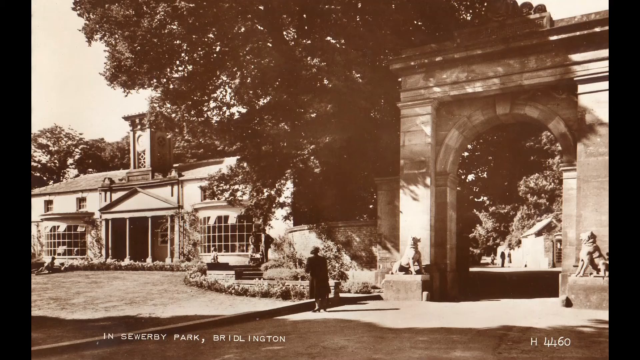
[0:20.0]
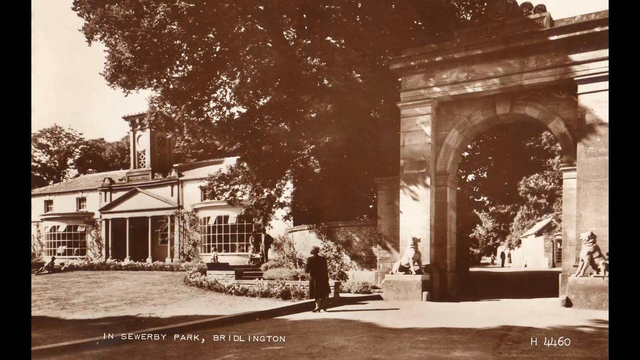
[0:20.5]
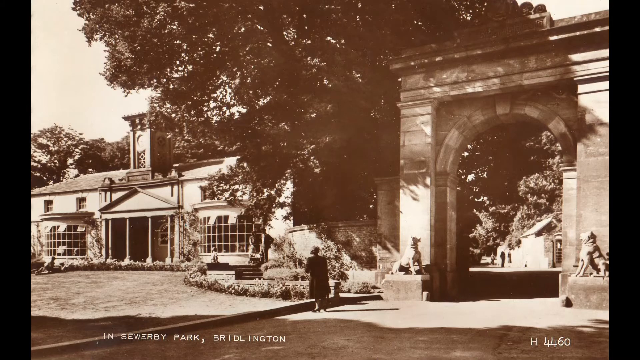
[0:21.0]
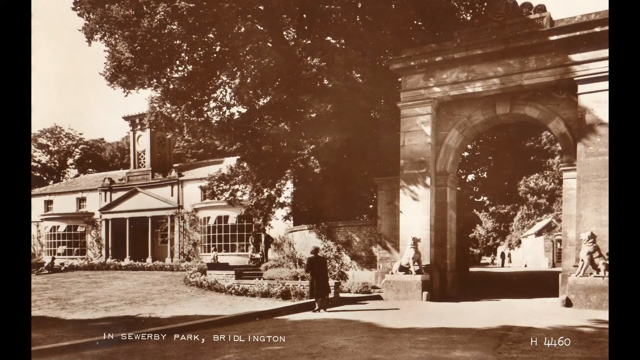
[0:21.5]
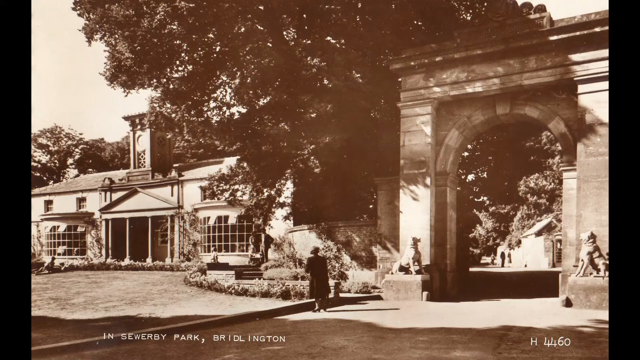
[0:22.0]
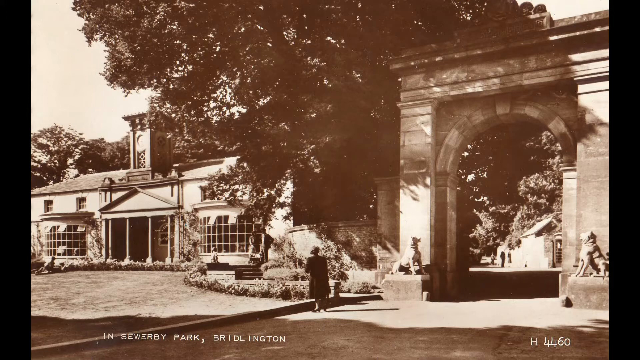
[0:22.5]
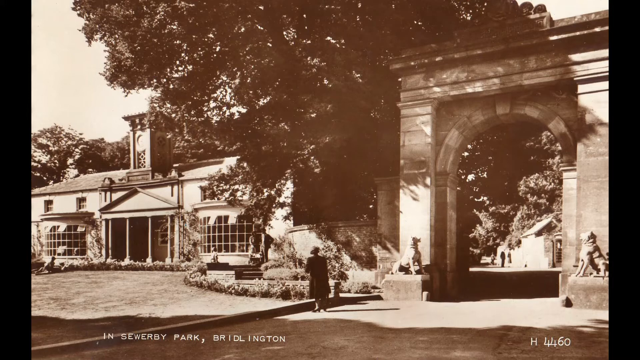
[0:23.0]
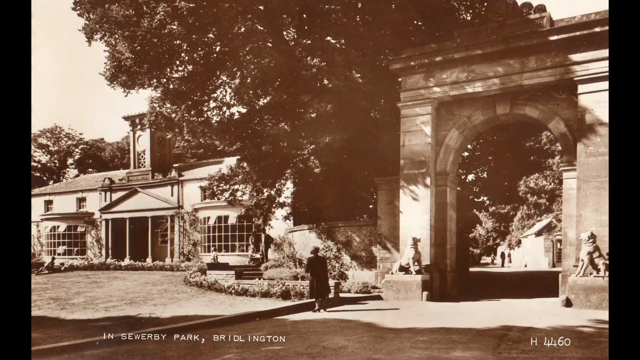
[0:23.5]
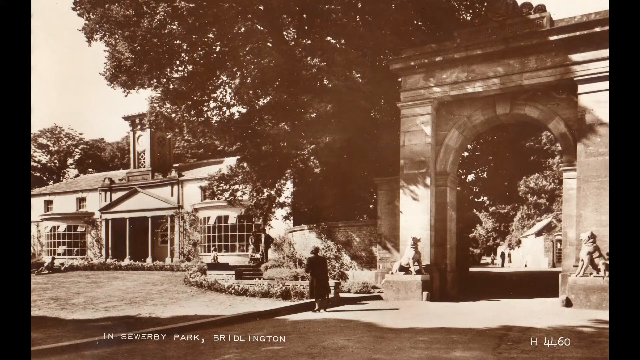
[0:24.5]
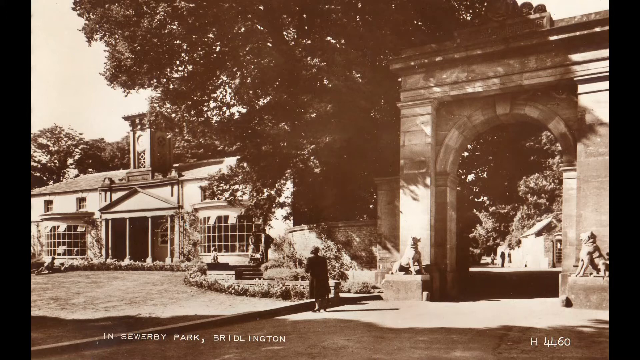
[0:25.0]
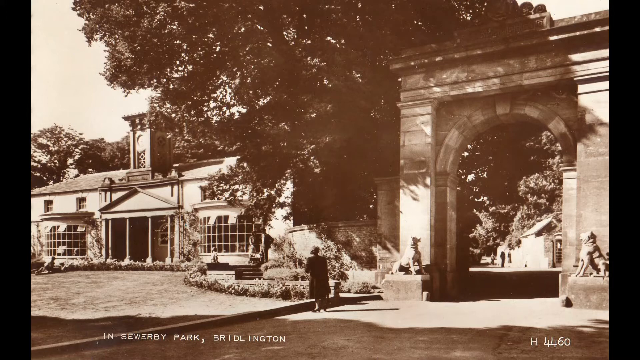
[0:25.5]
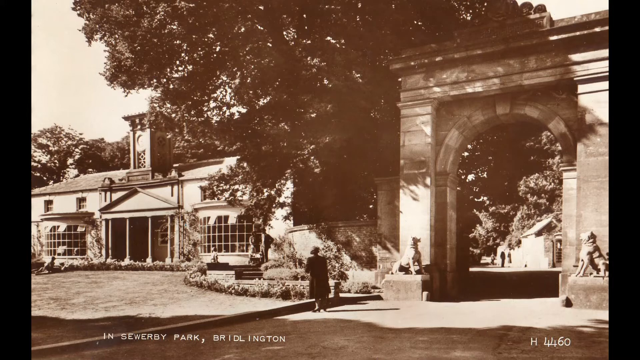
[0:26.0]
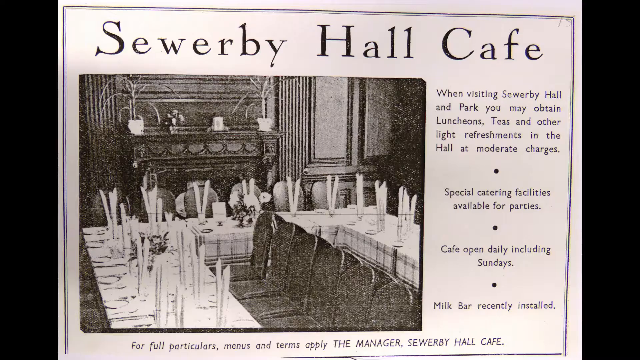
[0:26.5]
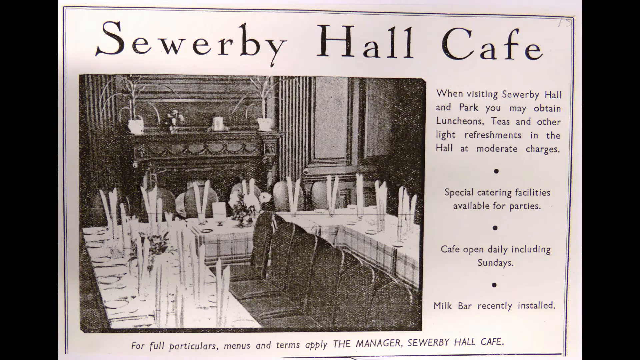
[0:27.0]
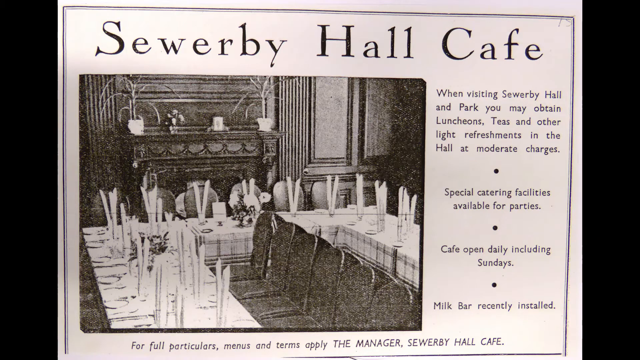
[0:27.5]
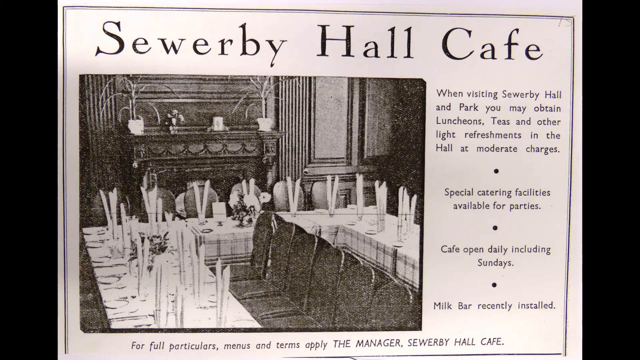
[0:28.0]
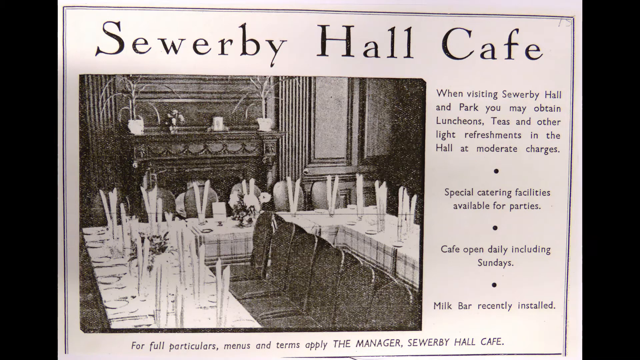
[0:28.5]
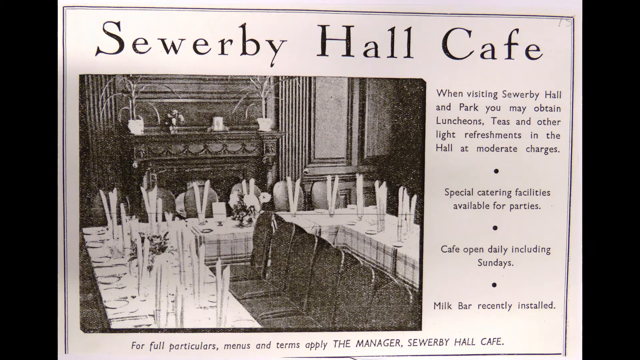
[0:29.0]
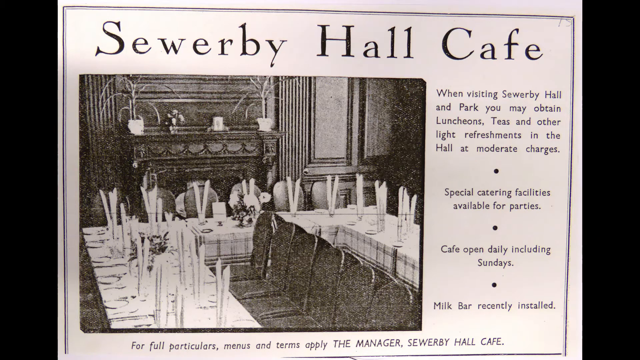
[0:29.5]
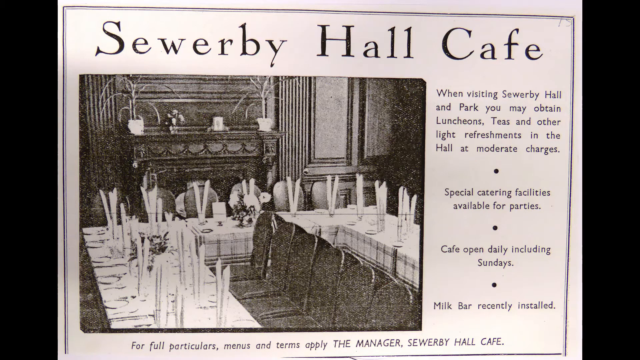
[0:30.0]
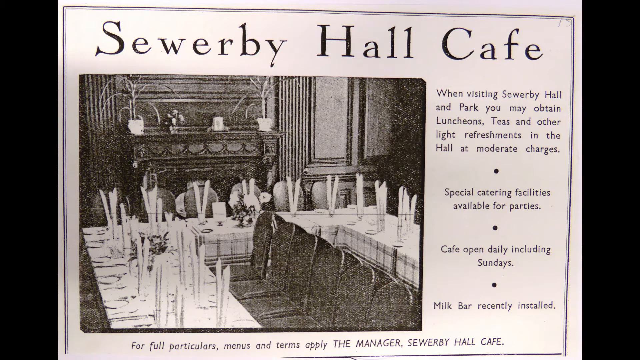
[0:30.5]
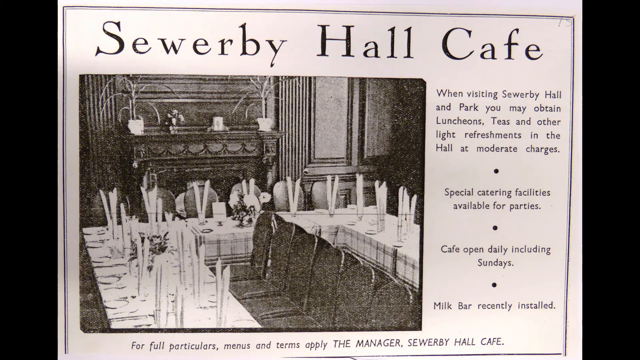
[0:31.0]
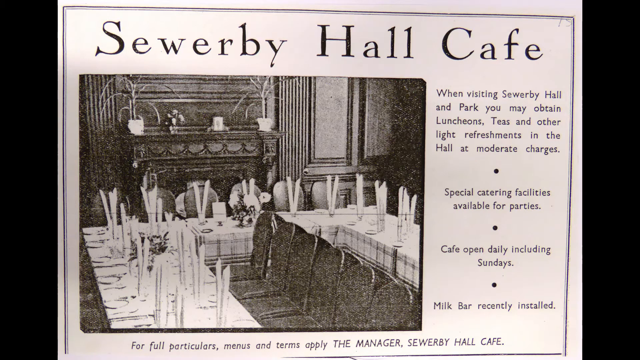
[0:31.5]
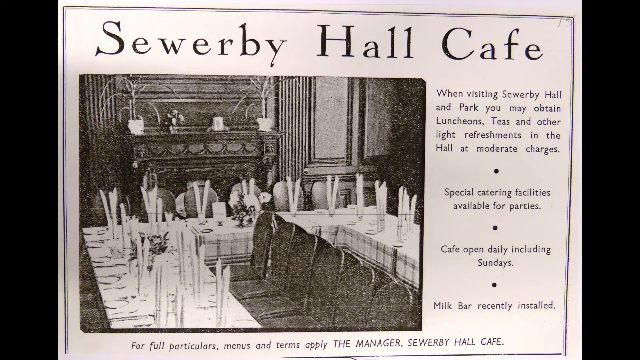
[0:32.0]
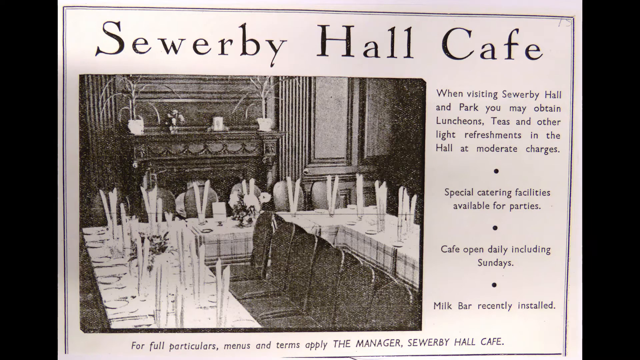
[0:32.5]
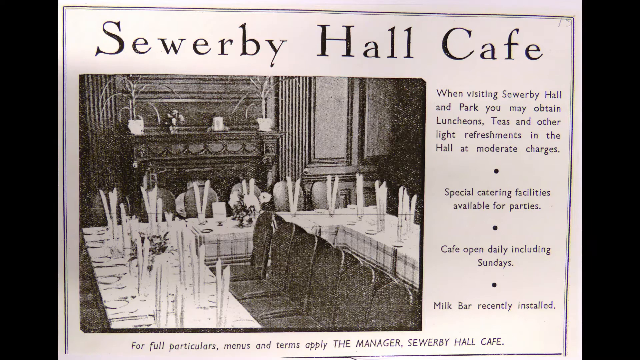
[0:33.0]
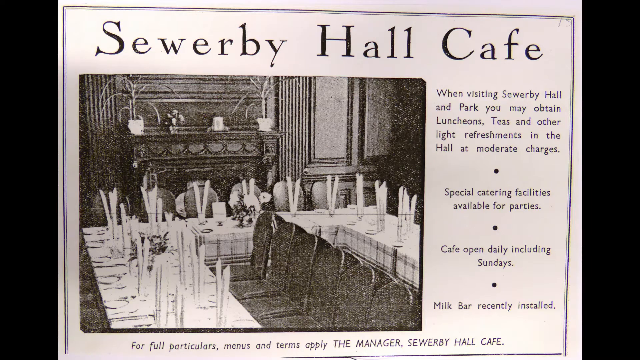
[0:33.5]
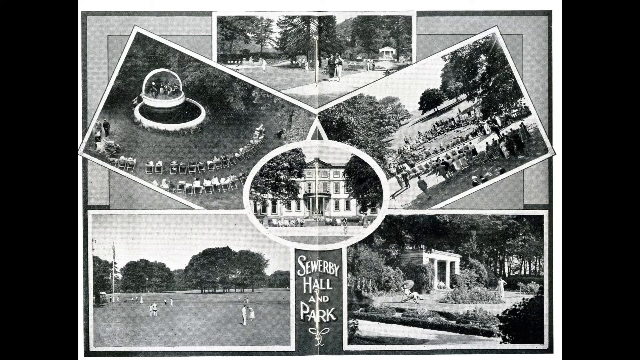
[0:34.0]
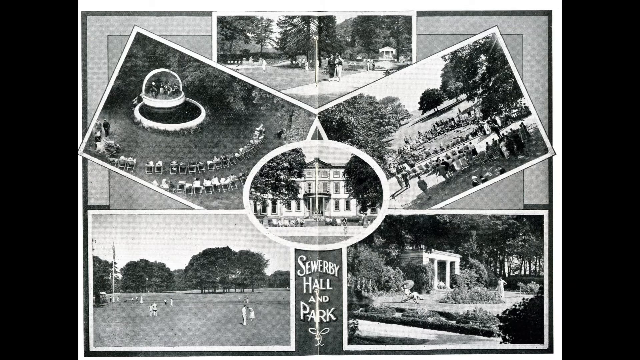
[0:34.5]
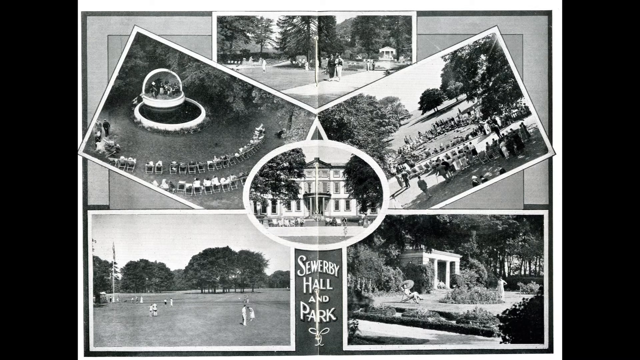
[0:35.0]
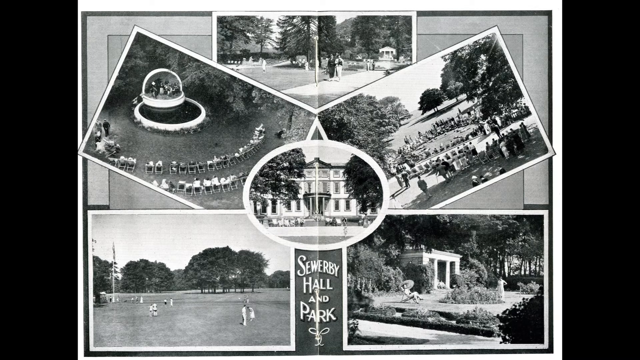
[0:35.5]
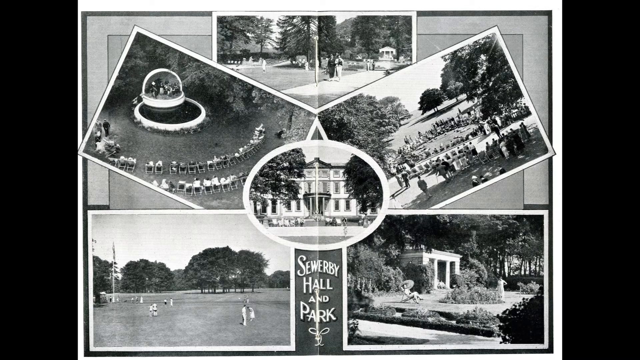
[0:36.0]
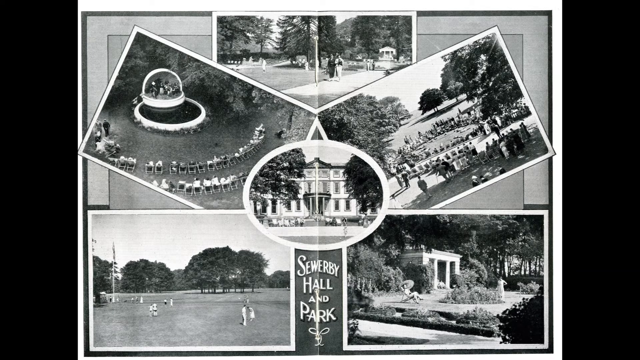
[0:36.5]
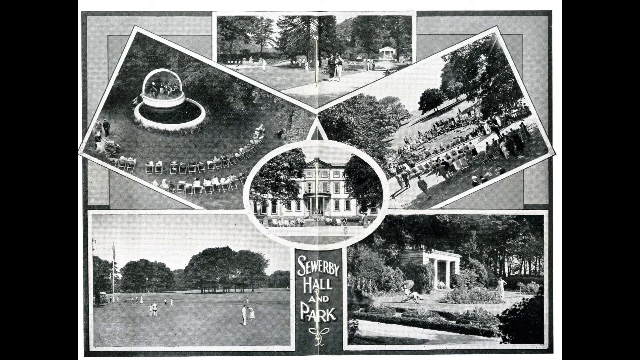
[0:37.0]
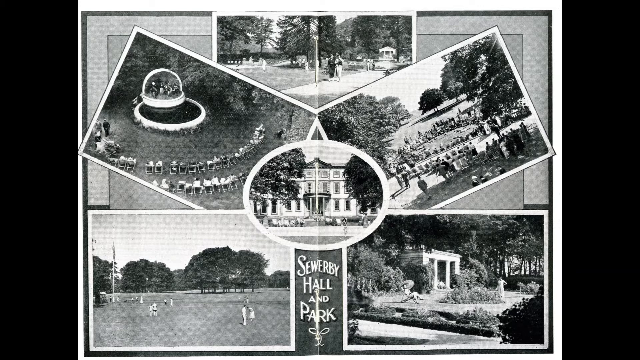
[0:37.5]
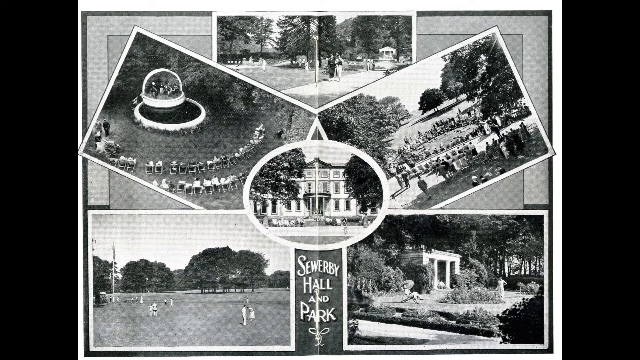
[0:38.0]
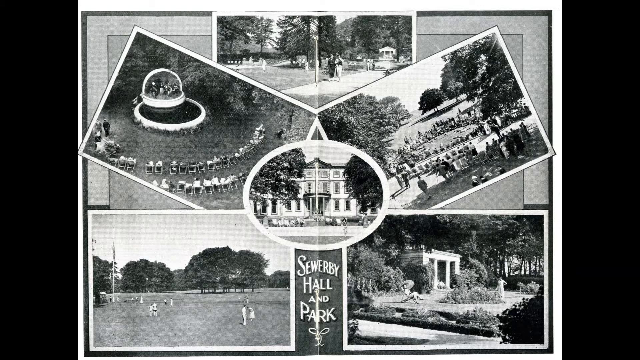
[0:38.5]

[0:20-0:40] The picture continues, with what seem to be captions at the bottom reading "in Sewer Bur Park, Bright-O-Ton". The park building has a traditional, Roman-looking front, with four pillars supporting its front entrance beneath a triangular roof, while the main roof is a more normal-looking sideways roof. There are big windows on either side, so it looks almost like a greenhouse or some sort of open window display building. To the right is a big entranceway with an arch in the center and a more square arch around it. On either side of the arch pillars, a dog statue faces inward toward the entranceway. A picture about the Sewer-by-Hall Cafe follows, and then more black-and-white photos of the area.